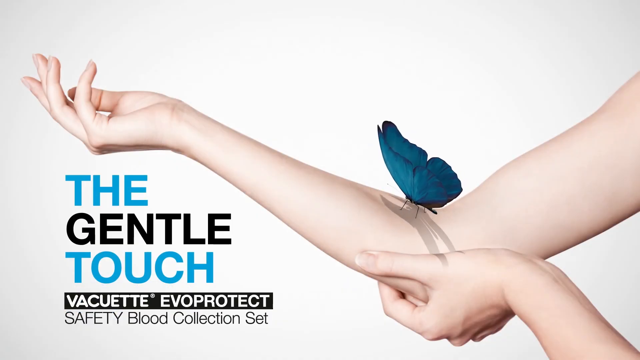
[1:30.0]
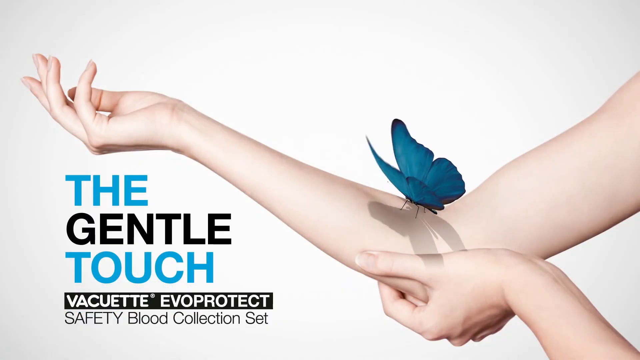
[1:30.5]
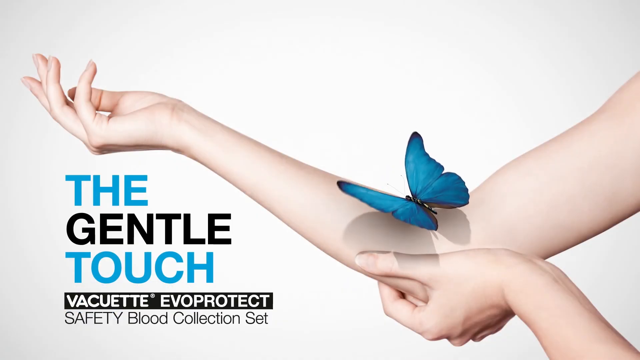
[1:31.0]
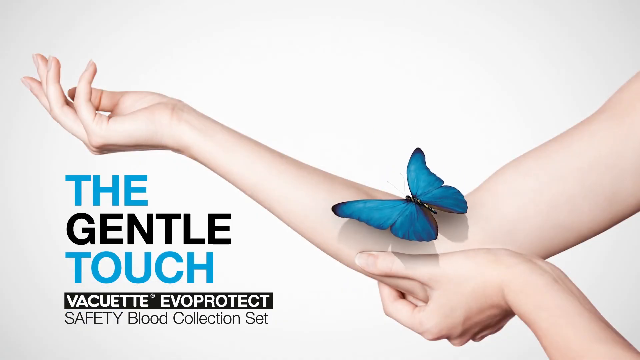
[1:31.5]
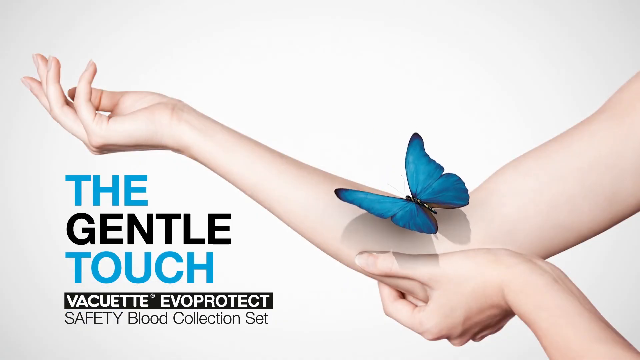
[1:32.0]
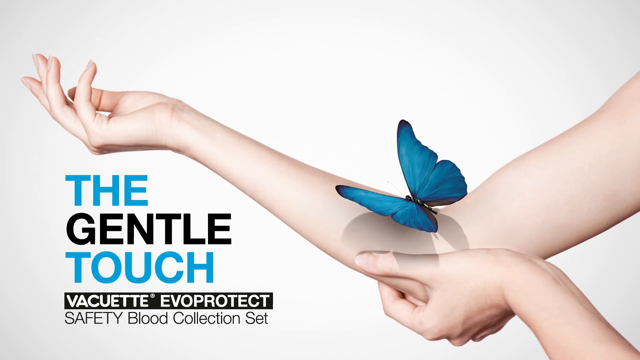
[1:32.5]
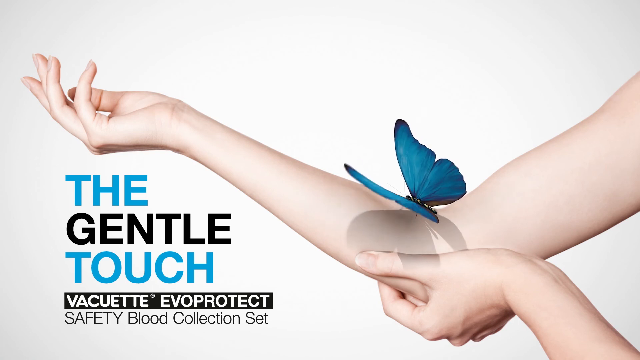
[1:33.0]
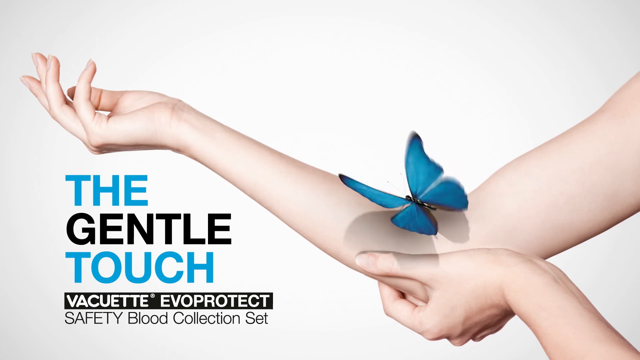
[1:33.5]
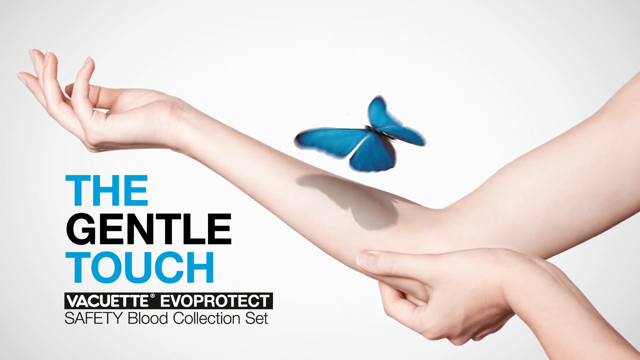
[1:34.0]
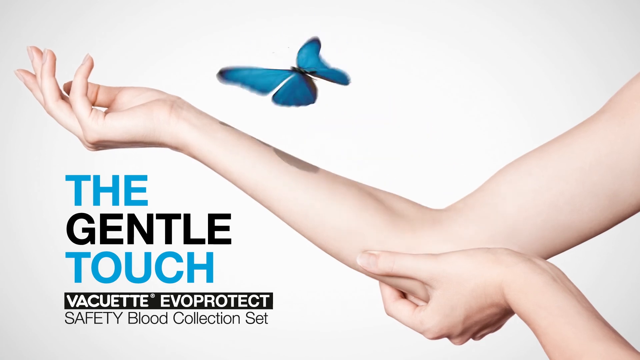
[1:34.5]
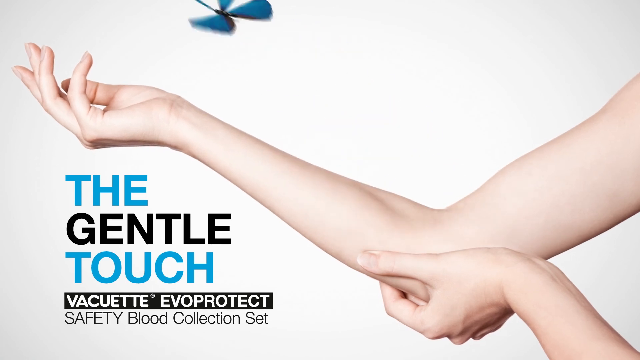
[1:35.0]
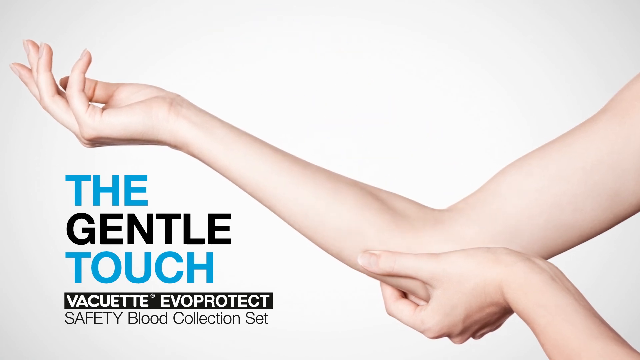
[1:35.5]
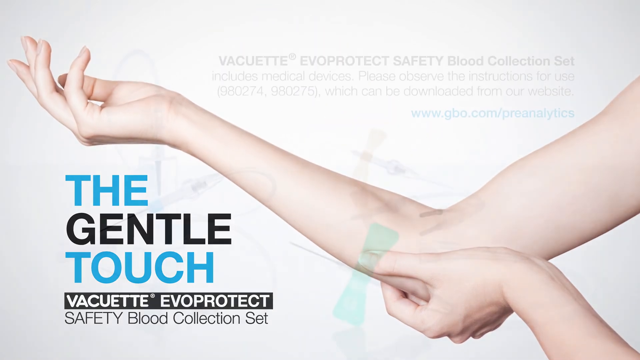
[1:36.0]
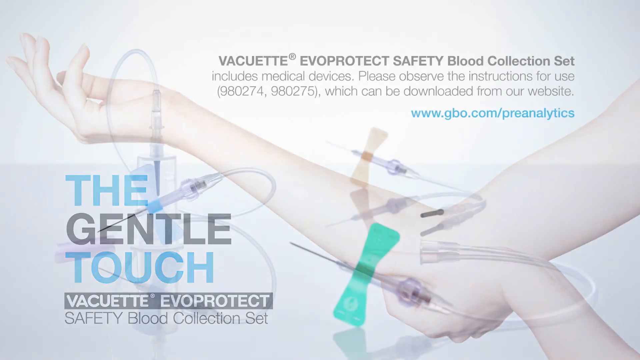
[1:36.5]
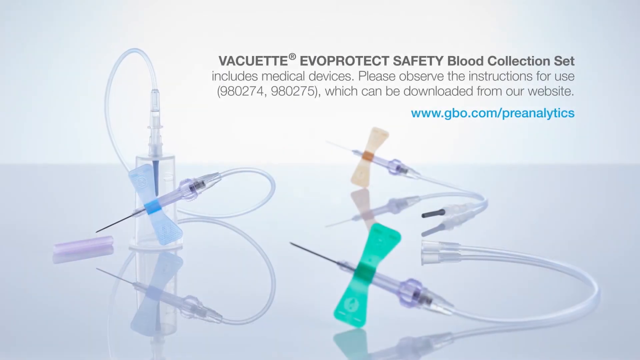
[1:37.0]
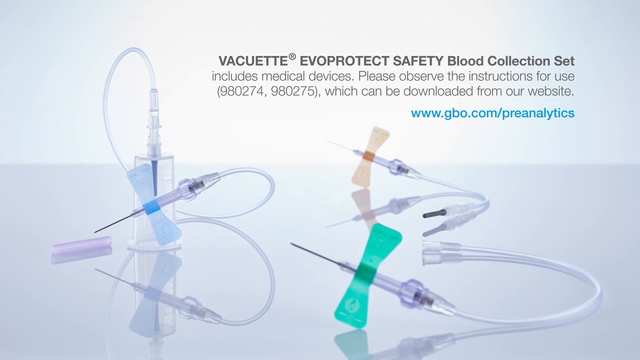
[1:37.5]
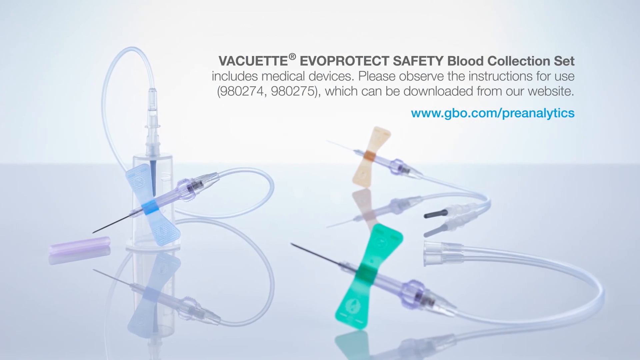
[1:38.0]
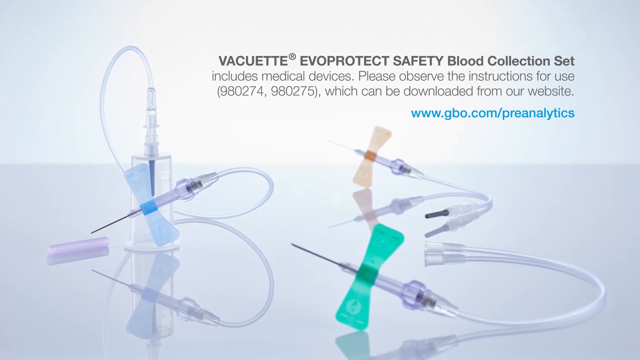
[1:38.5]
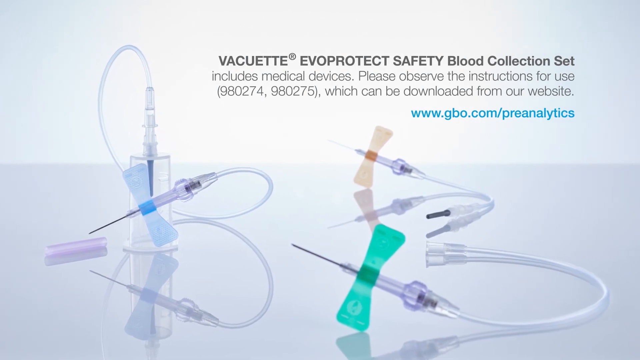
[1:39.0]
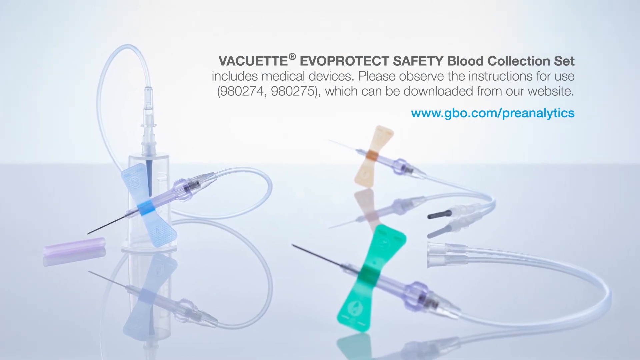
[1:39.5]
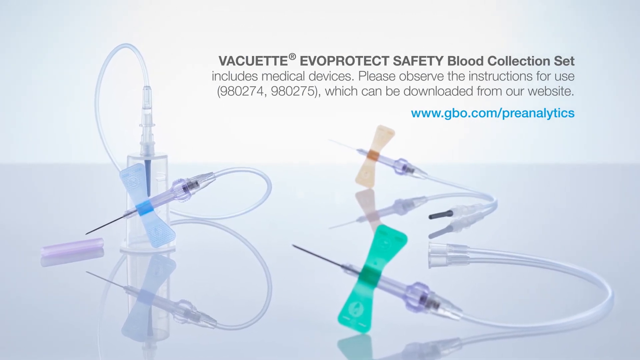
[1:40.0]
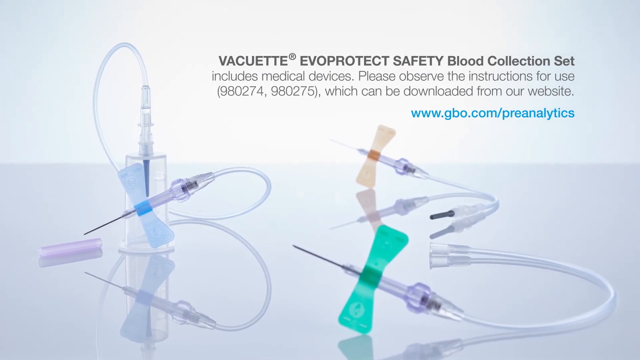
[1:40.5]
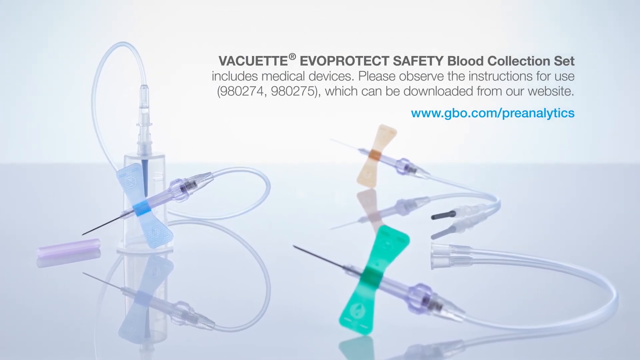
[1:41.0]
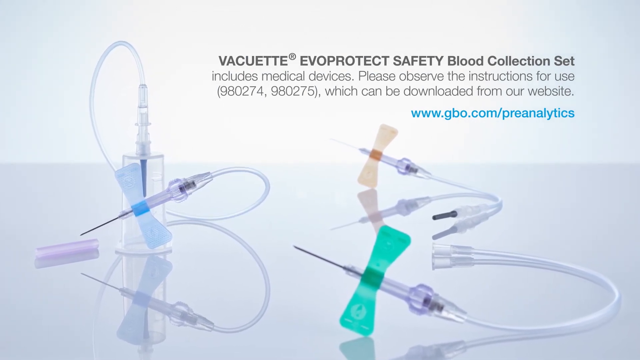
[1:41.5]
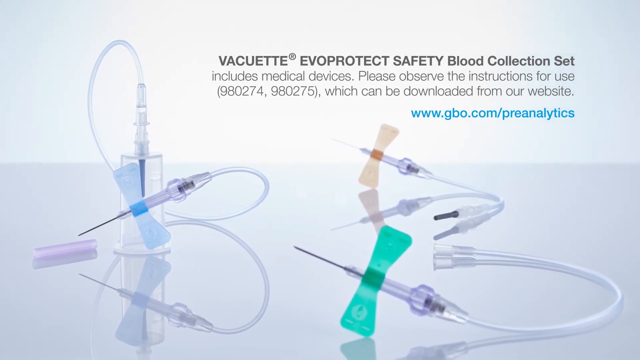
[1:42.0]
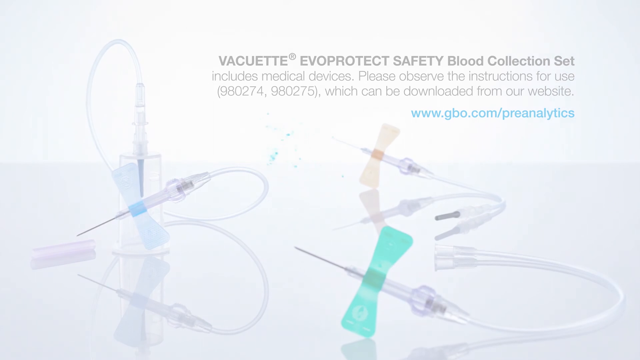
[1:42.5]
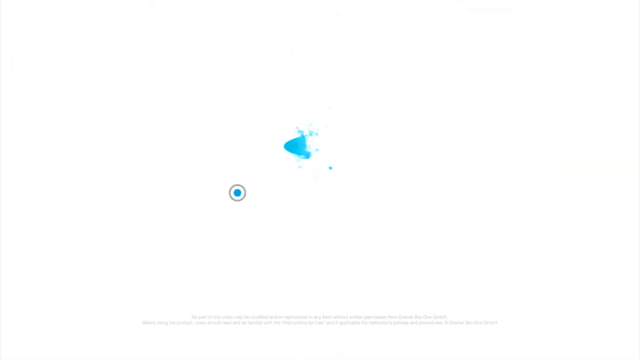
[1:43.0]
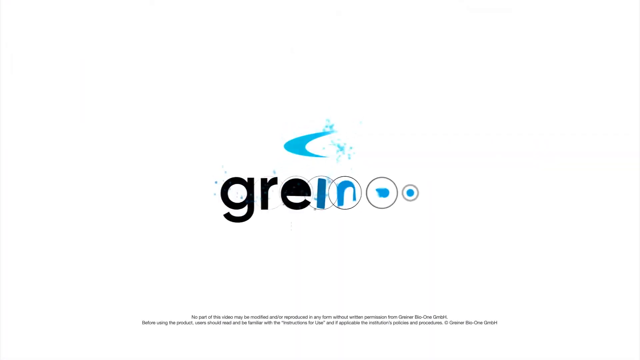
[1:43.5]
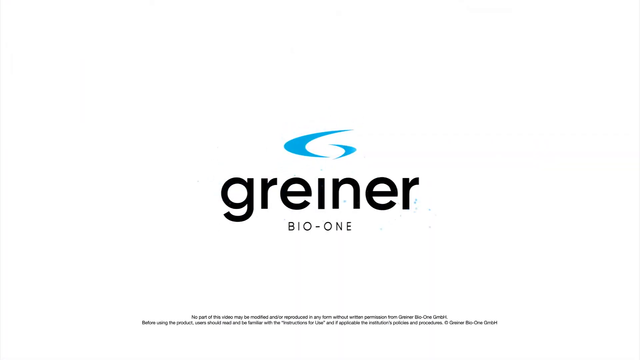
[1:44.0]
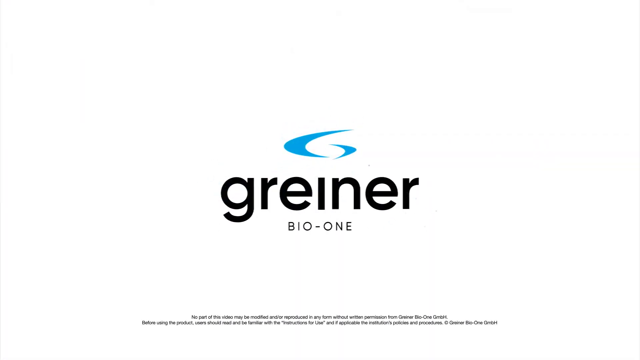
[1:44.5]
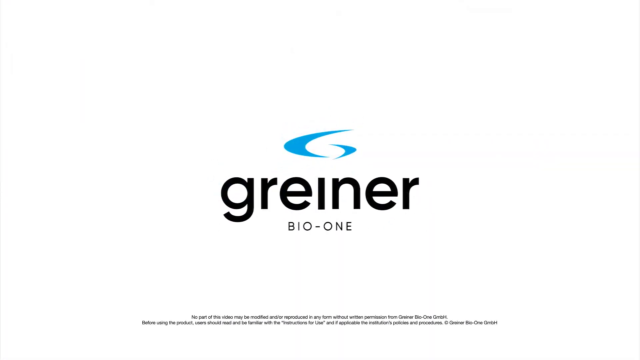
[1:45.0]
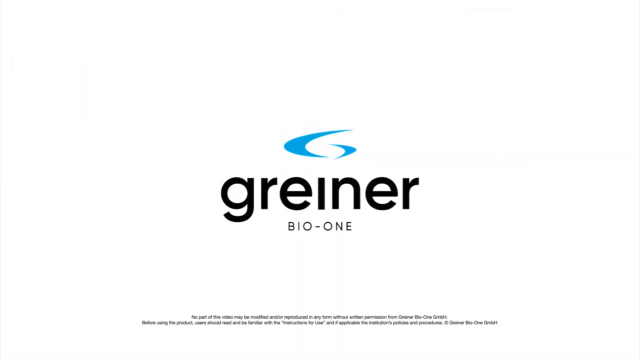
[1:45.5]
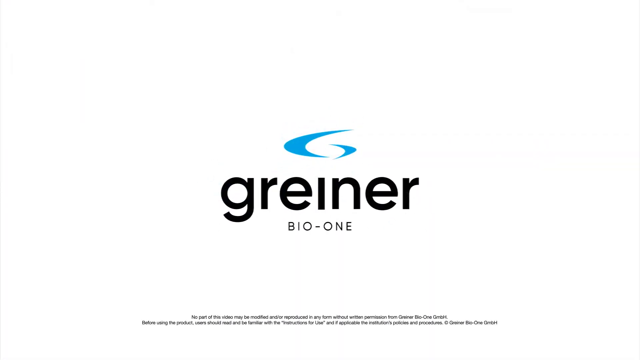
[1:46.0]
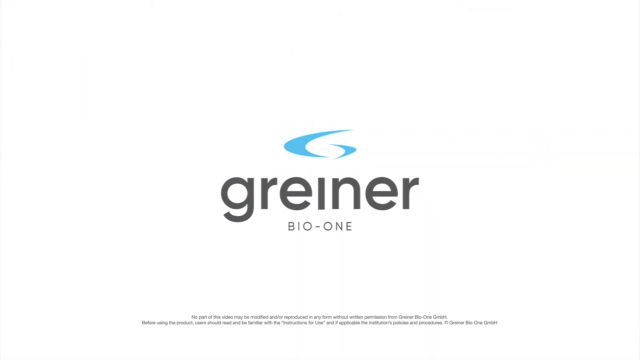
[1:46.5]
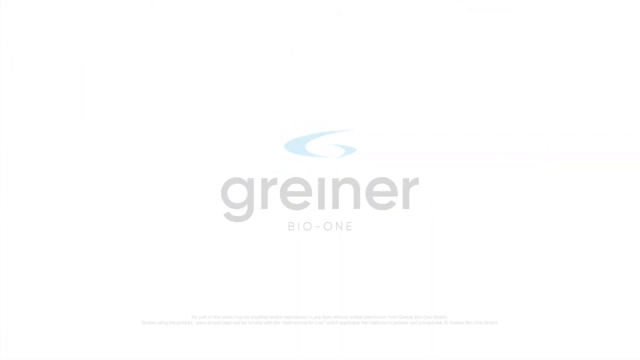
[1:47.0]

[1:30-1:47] The aquamarine-colored butterfly flaps its wings on the lady's elbow; her right arm is outstretched and her left hand is underneath her right elbow. The butterfly then takes off and flies away over the top of the screen. The screen changes to show examples of the Vacuette Evoprotect safety blood collection sets: at least three of these syringes, told apart by their differently colored wings, one light blue, one brownish to orangish, and one green. On the screen it says "please observe the instructions for use, which can be downloaded from our website," followed by the website "www.gbo.com/preanalytics." After that fades out, the very first screen appears again, showing "Griner Bio 1" with the stylized logo on top of it.